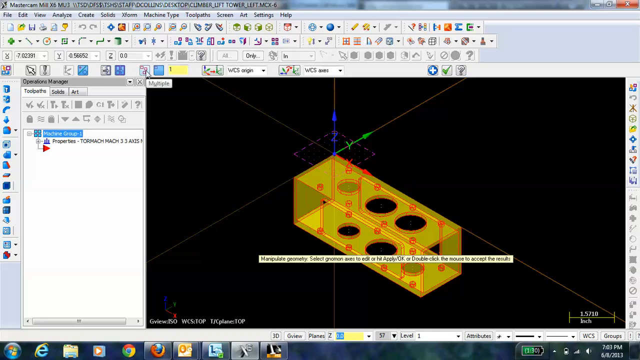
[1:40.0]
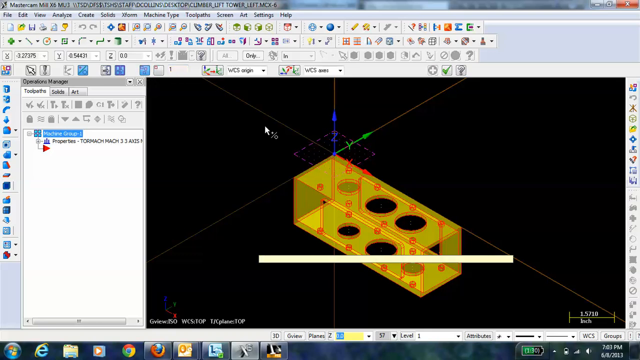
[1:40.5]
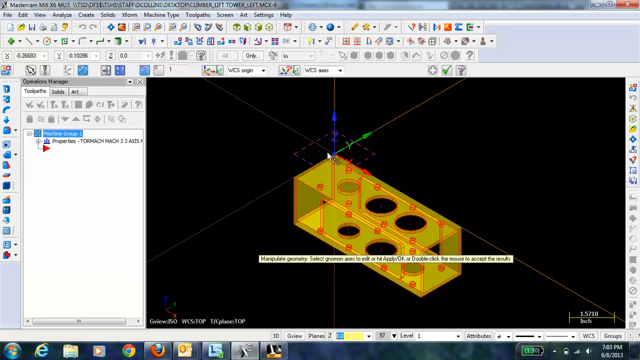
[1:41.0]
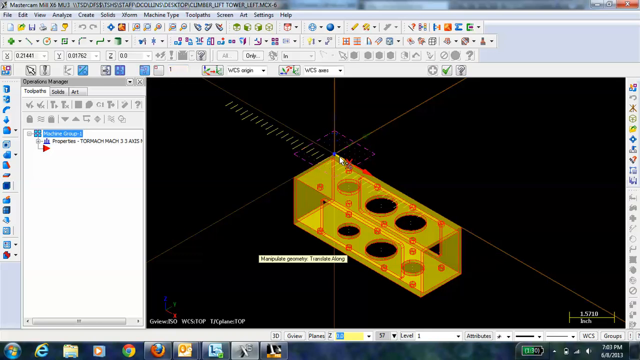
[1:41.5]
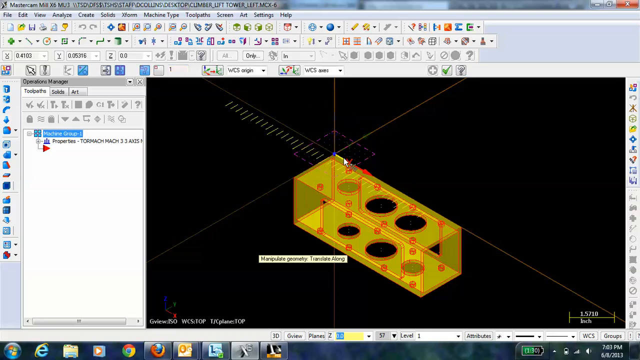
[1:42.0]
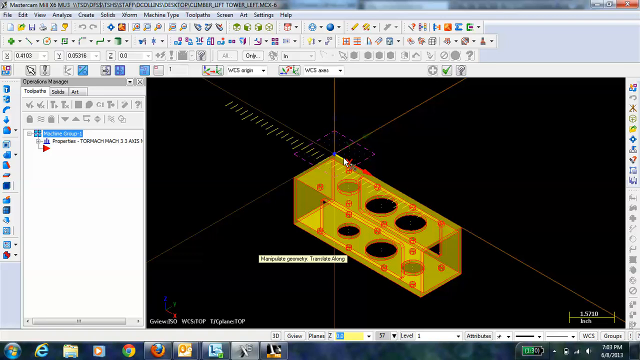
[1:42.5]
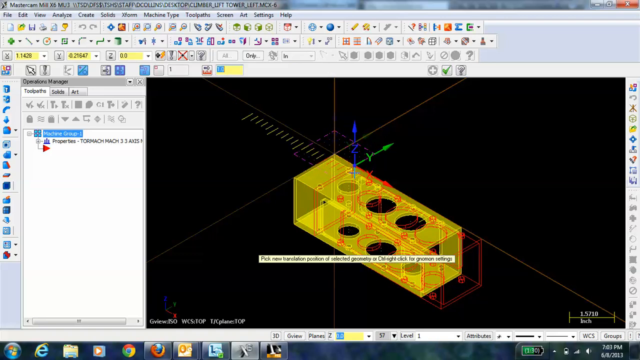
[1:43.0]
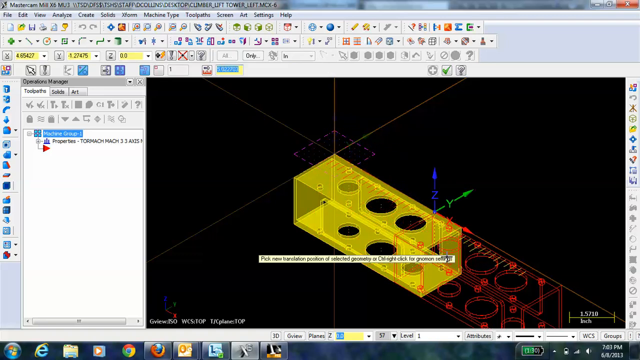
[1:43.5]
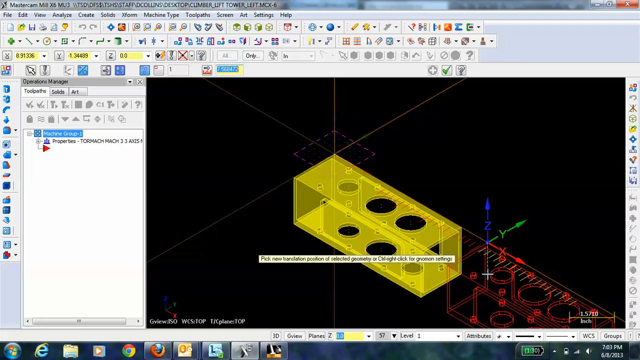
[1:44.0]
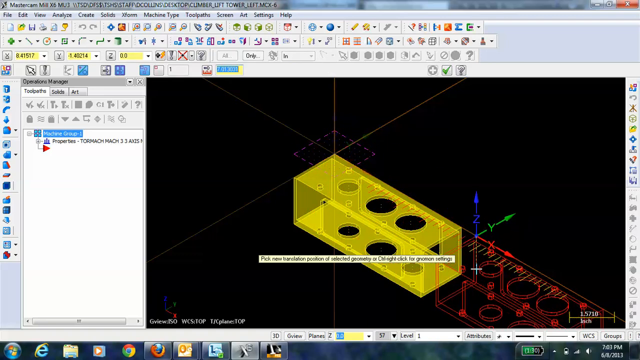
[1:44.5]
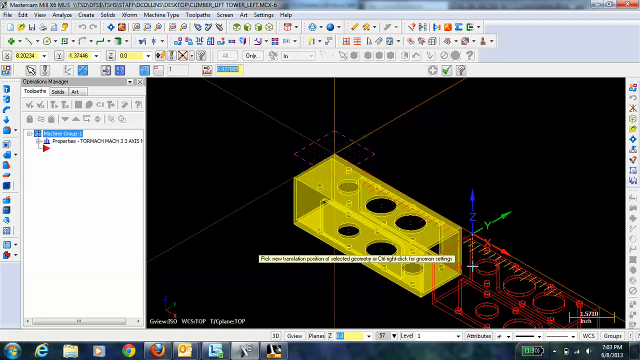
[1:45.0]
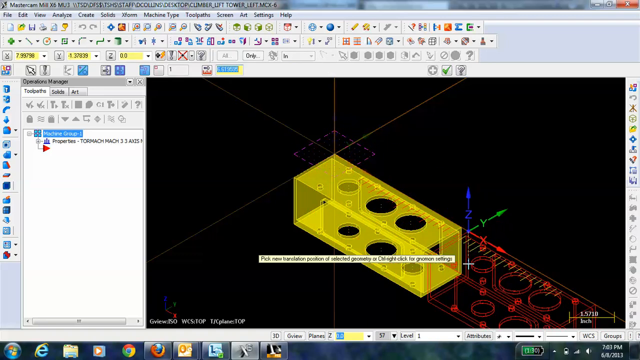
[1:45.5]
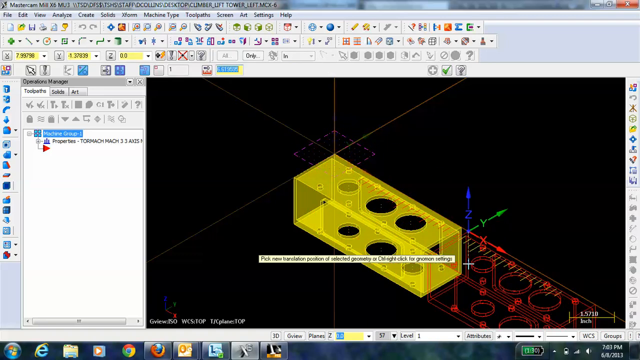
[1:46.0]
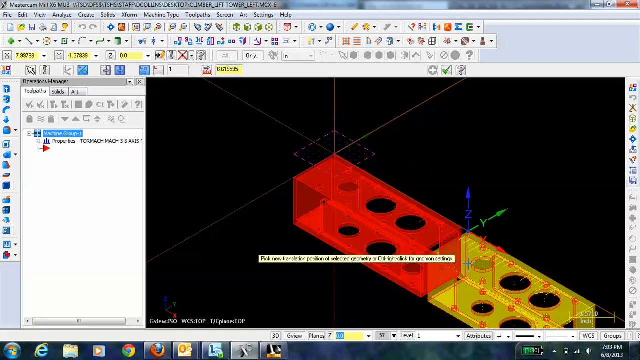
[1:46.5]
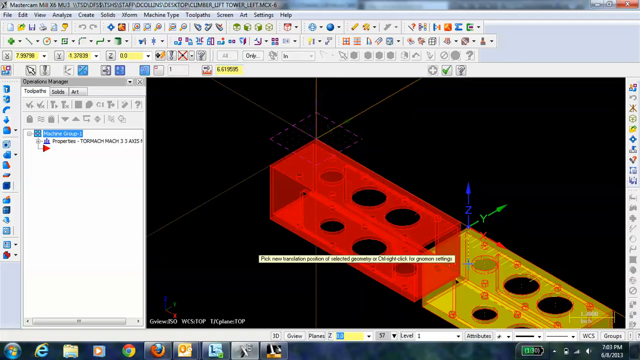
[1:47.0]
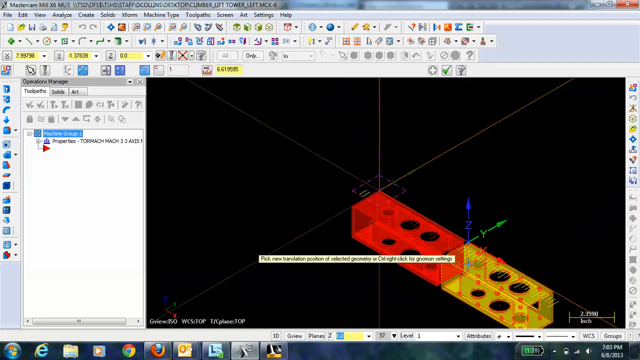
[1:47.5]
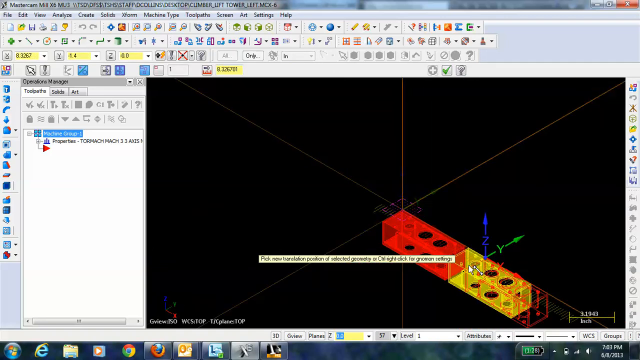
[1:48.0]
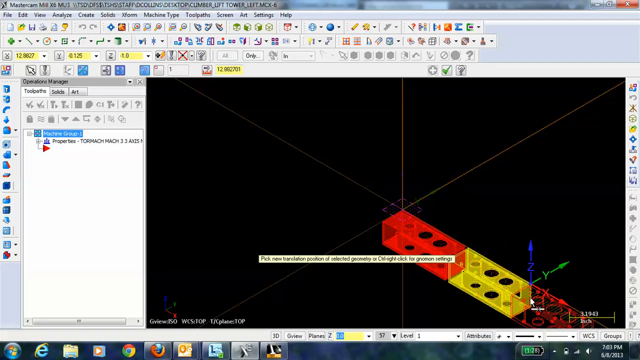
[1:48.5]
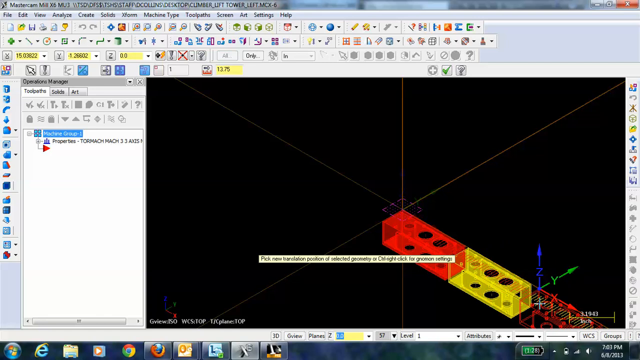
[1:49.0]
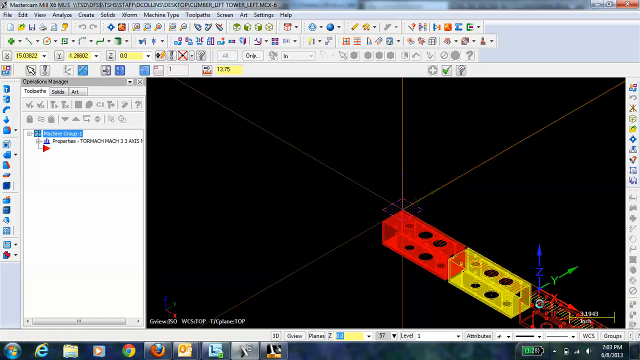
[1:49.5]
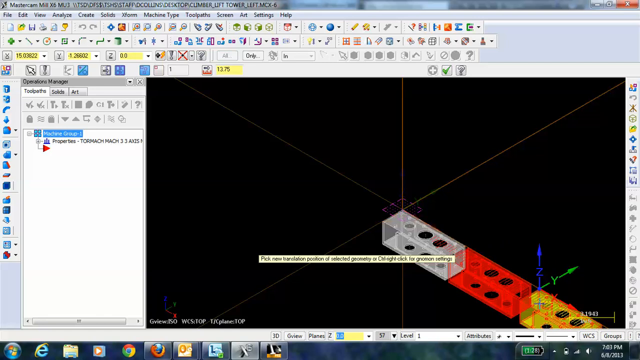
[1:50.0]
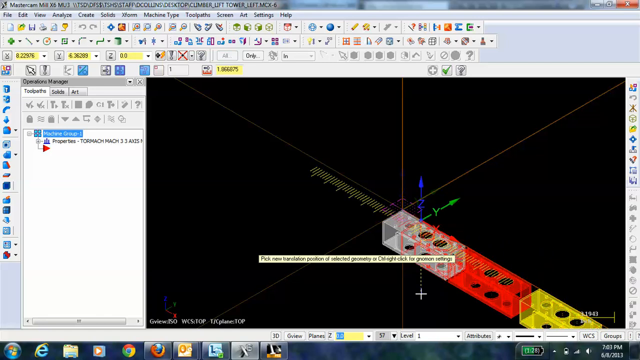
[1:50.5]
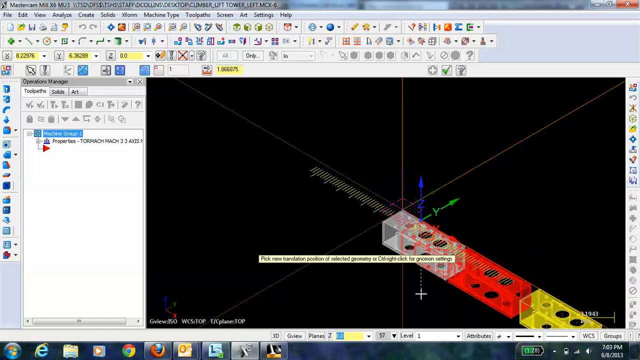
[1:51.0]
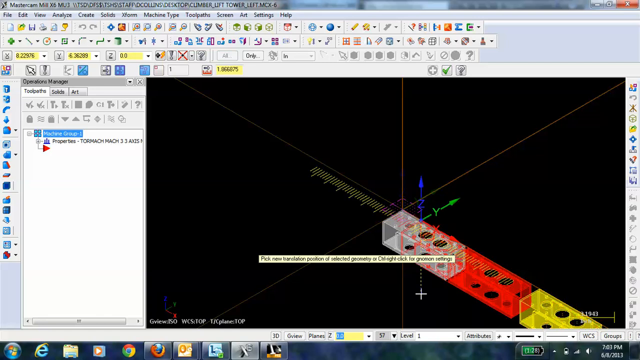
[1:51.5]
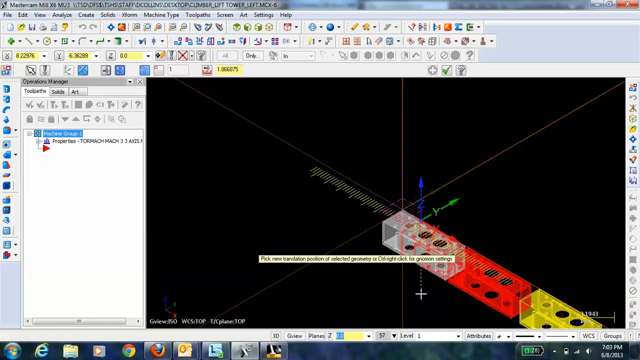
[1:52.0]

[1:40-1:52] The box is translucent yellow again. He clicks at the corner, the anchor point of the X, Y, and Z axis, clicking multiple times to bring up the rotate control and the small measuring control. He moves the translucent box down the X axis to the bottom right and positions it, and a red box shows the place where the translucent box was initially. The view zooms in and out a little. He moves the red wireframe box further down the Z axis, then moves back up to where the yellow translucent box was, and it is now a translucent white box.